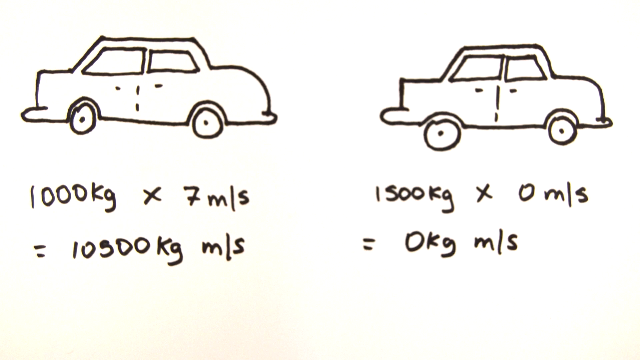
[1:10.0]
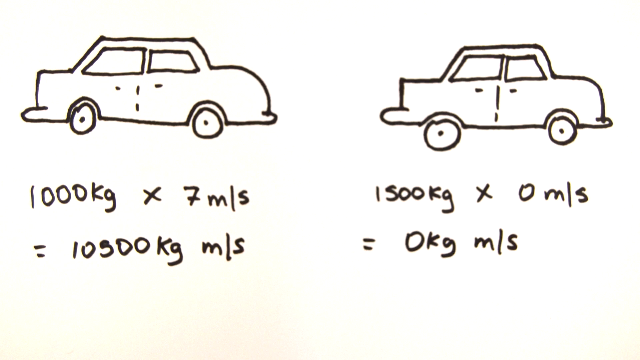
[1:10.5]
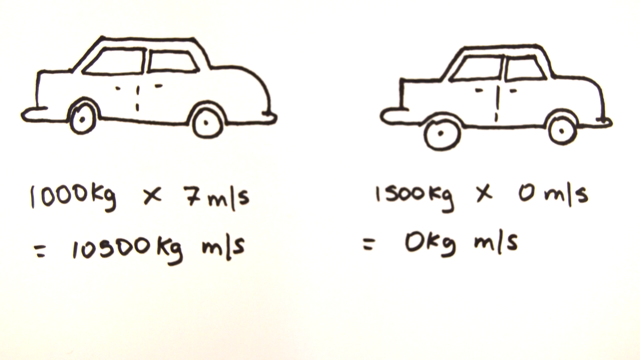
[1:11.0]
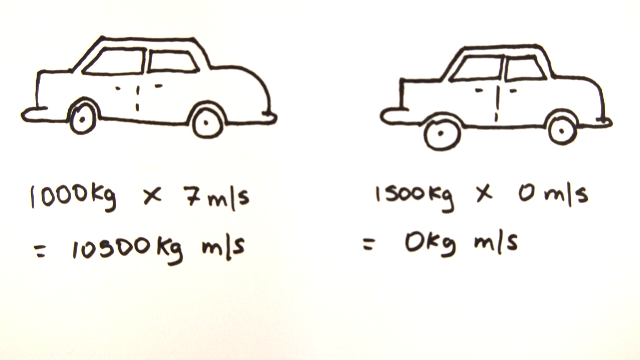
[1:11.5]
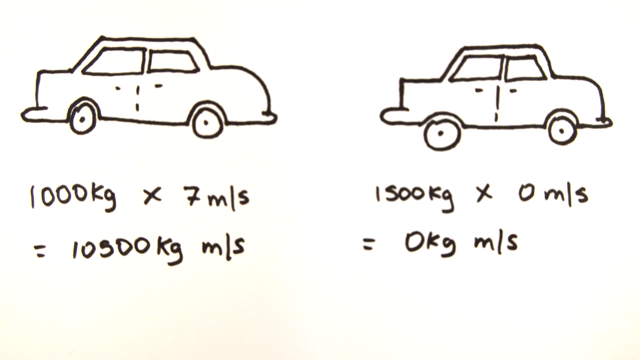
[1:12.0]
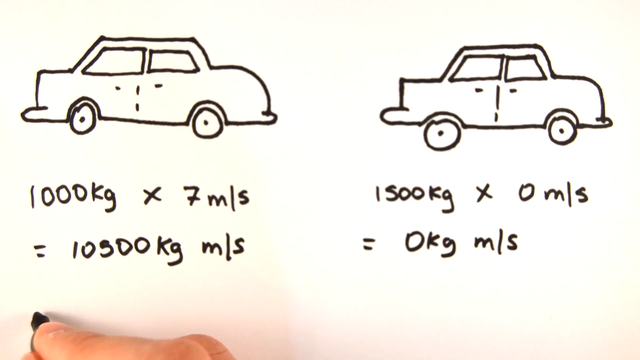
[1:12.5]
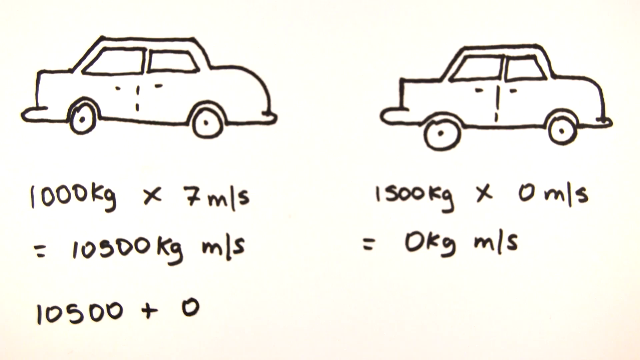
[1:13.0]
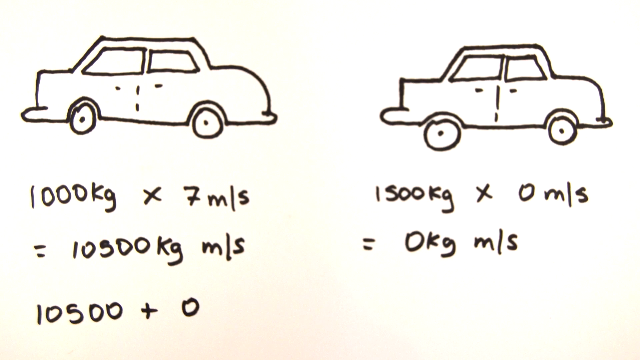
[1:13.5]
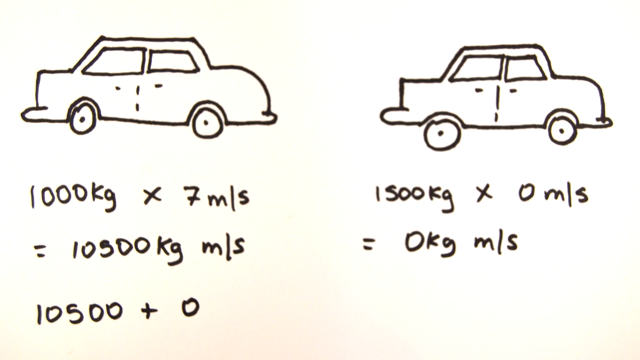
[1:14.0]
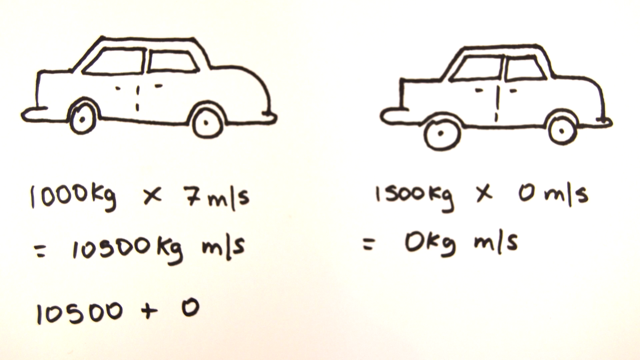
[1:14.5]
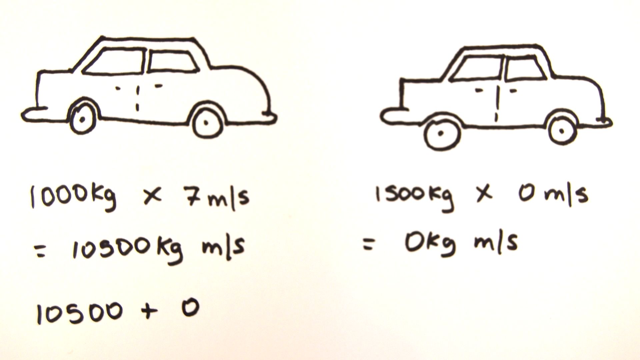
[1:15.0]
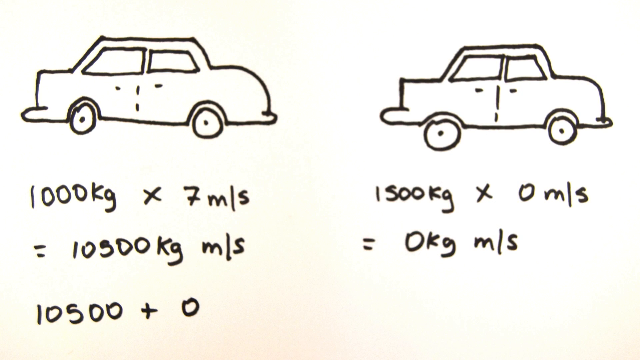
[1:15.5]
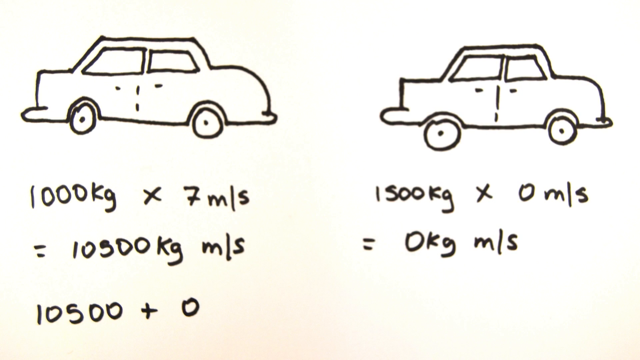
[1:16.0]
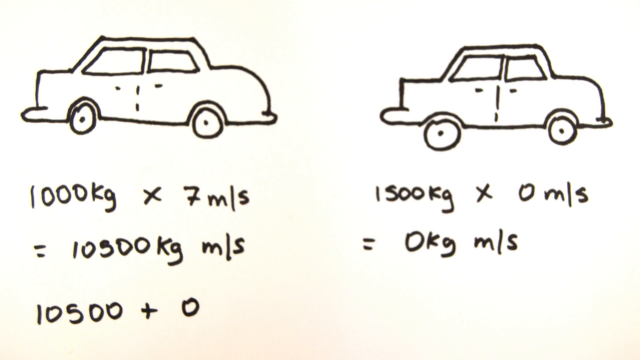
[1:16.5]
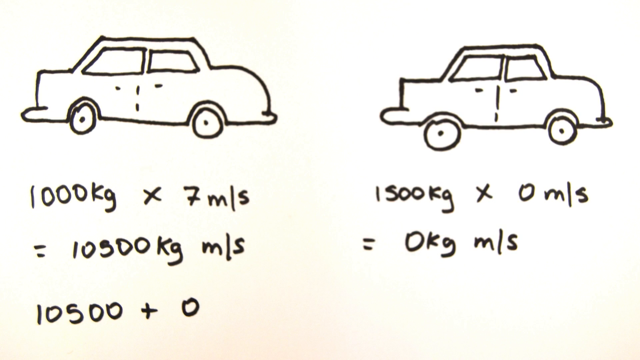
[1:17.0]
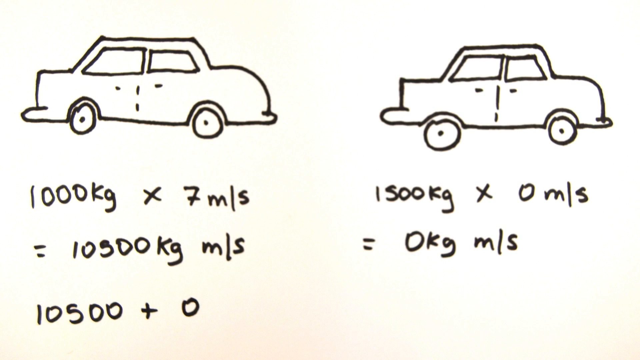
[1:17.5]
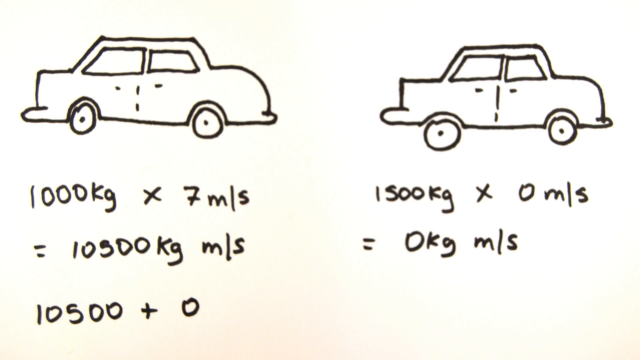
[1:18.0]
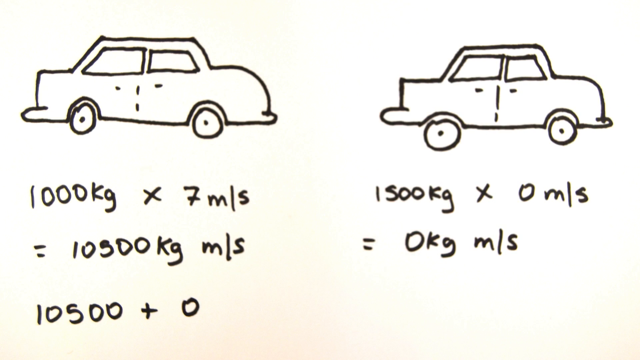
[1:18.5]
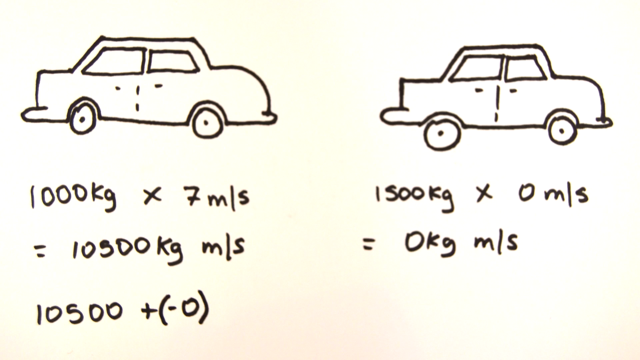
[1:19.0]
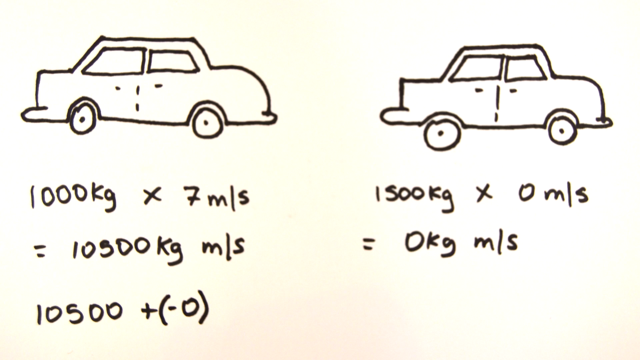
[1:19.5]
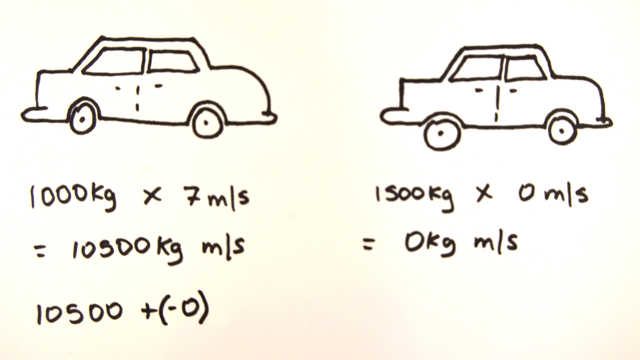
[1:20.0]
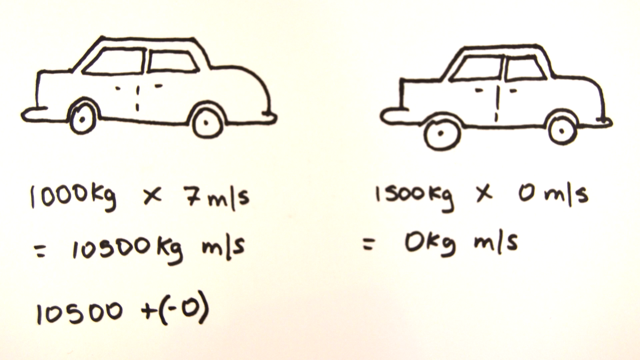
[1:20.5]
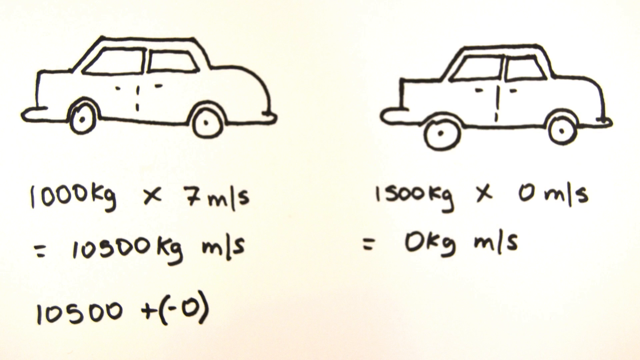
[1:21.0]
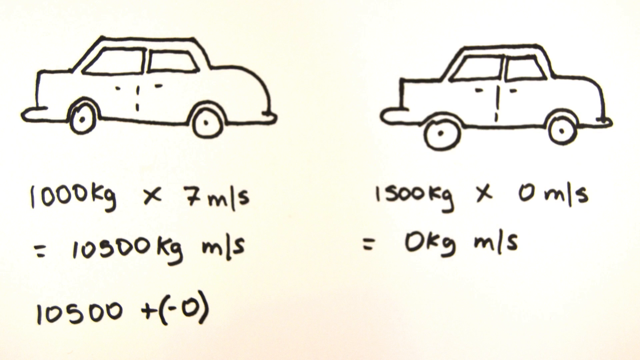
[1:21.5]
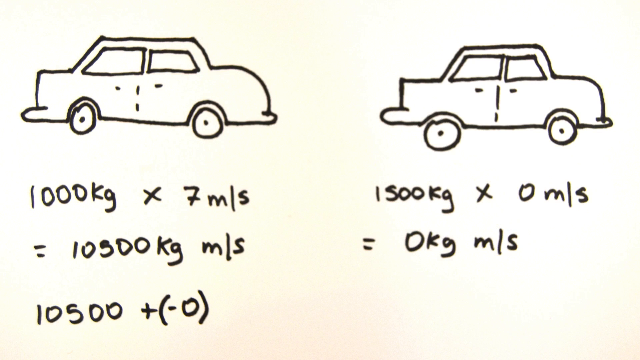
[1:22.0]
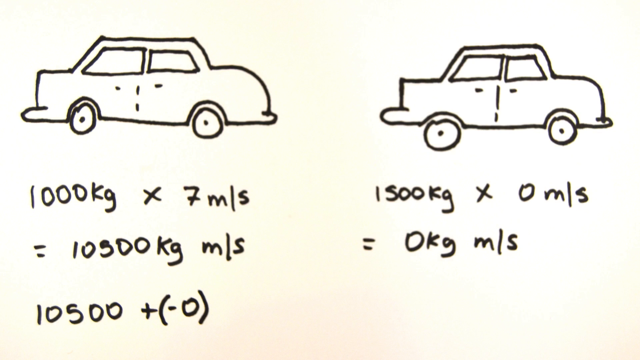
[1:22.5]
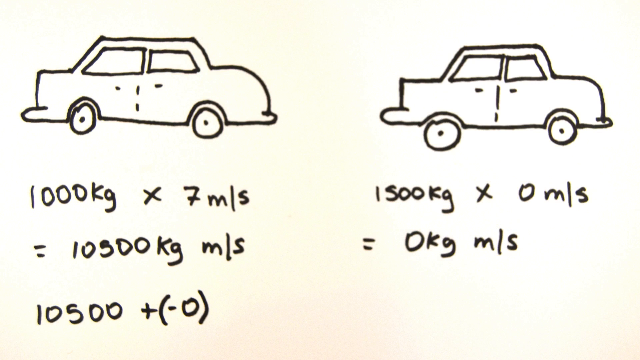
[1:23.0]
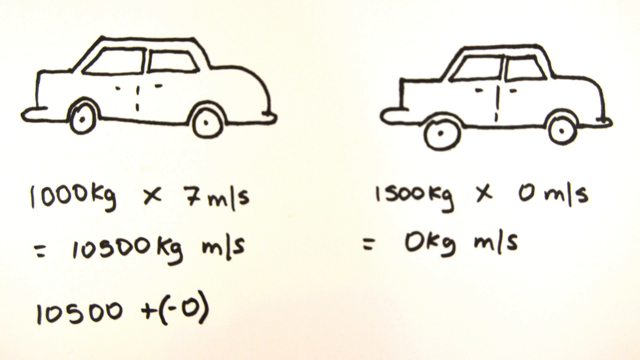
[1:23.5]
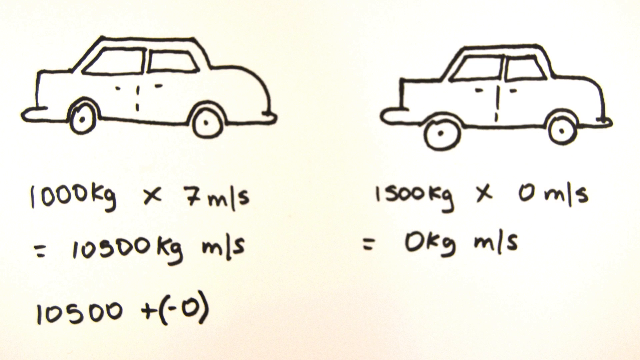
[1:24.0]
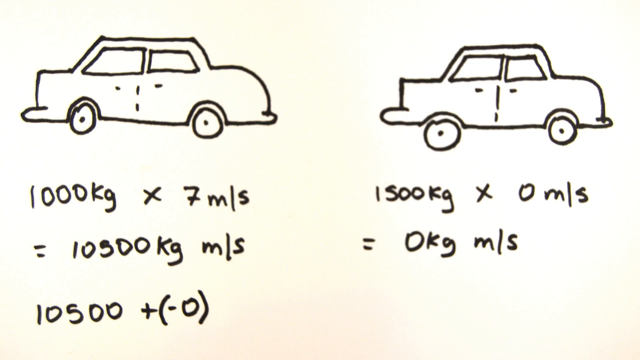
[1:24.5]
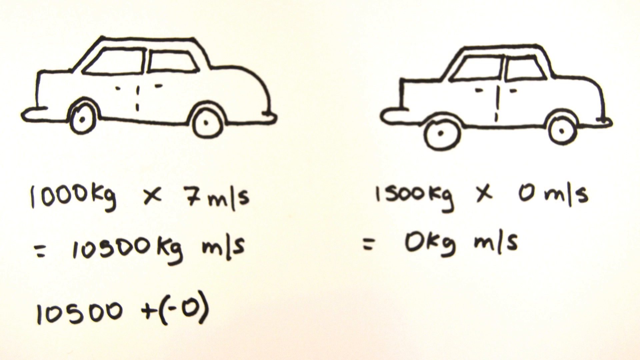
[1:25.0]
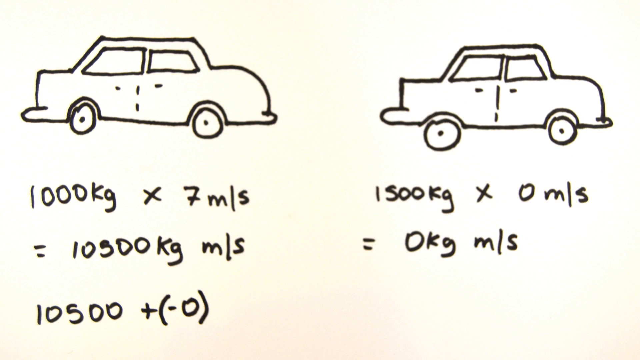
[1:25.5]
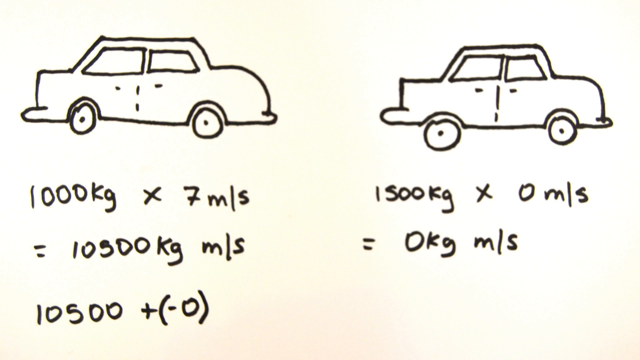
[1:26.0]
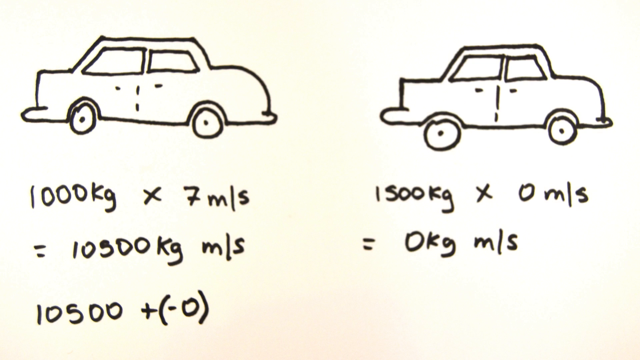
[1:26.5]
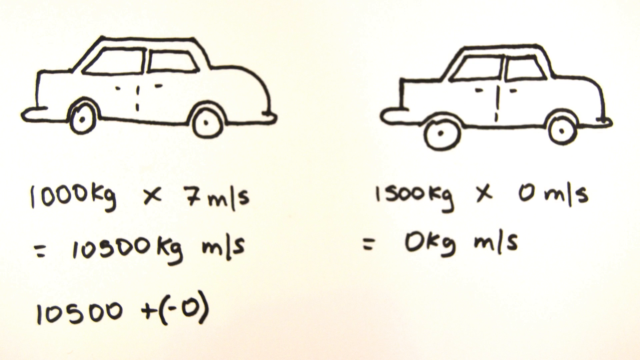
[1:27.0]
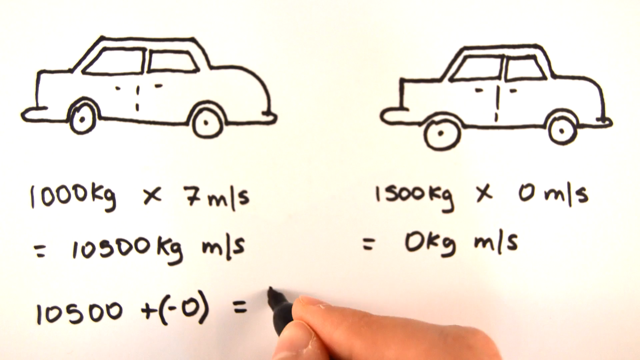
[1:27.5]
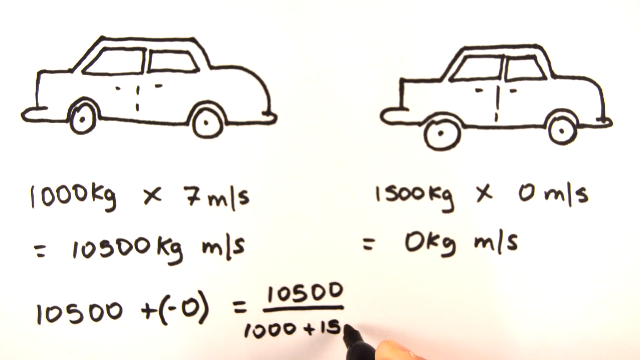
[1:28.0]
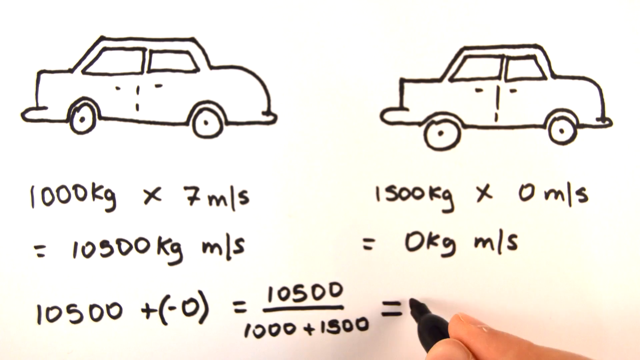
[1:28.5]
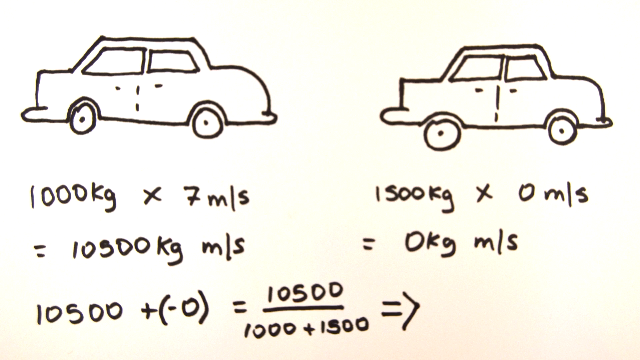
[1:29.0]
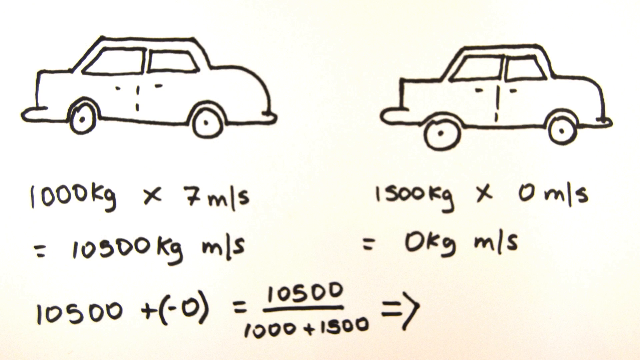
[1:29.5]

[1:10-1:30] There is a car on the left and one on the right, at the top. On the left side, text reads "1,000 kg × 7", apparently followed by m/s, and possibly an equals sign with what looks like 10,500 or 10,300 kg m/s. By the car on the right, it says "1,500 kg × 0 m/s = 0 kg m/s". The person is still writing, and on the left side it says "10,500 + 0" followed by "(-0)" in parentheses, "= 10,500" over "1,000 + 1,500", with an equals sign and the end of an arrow pointing toward the right side.